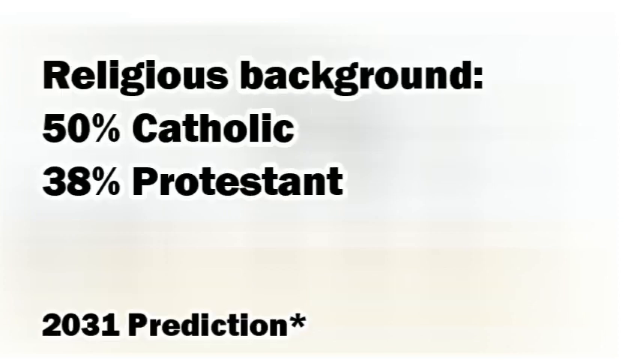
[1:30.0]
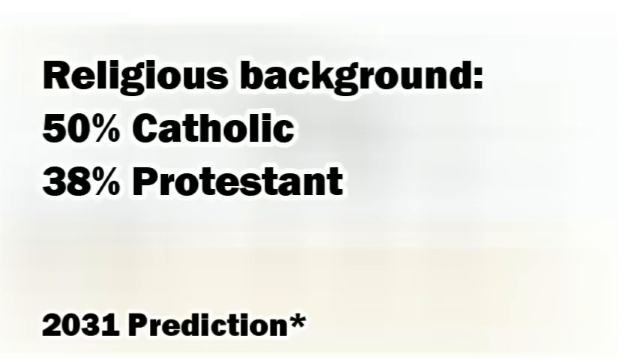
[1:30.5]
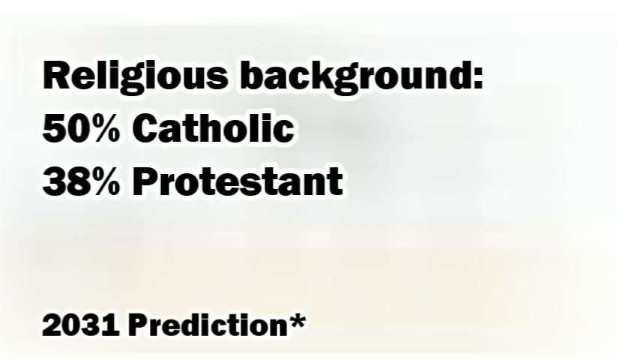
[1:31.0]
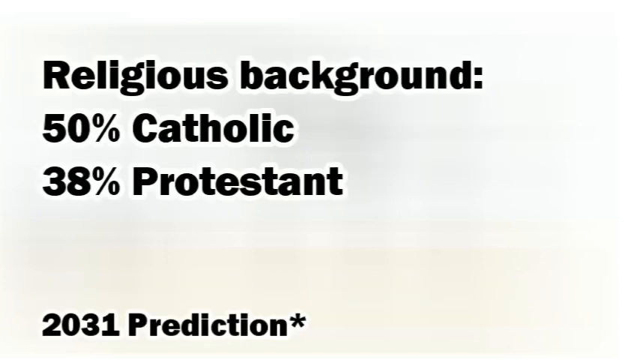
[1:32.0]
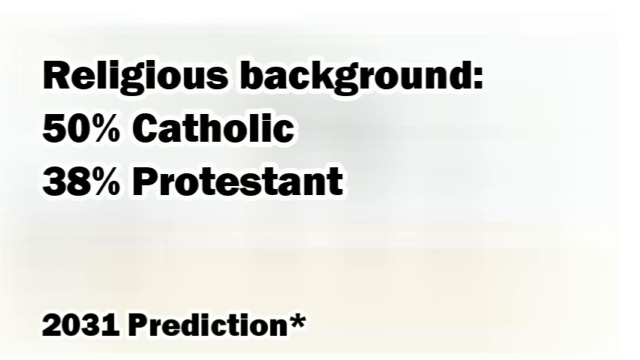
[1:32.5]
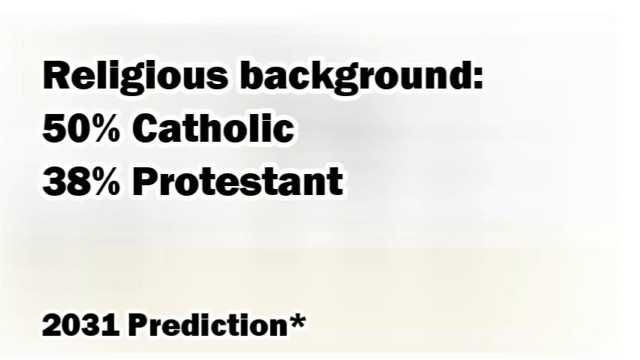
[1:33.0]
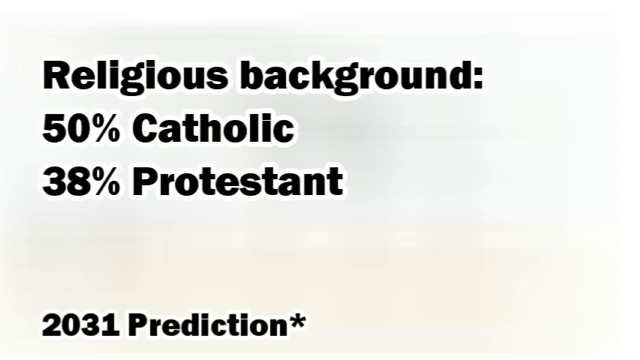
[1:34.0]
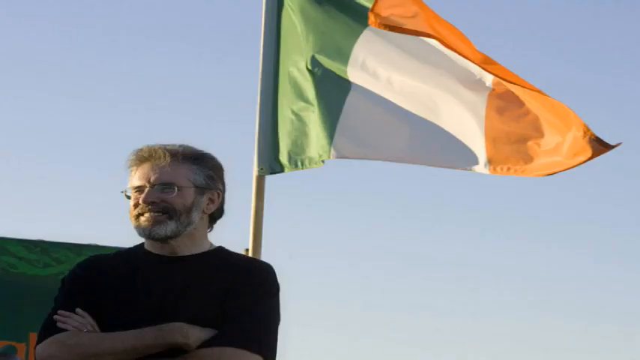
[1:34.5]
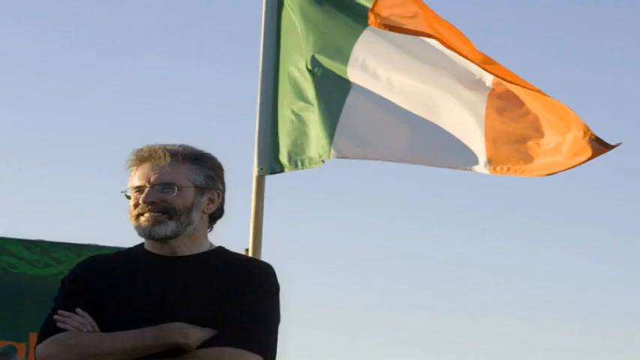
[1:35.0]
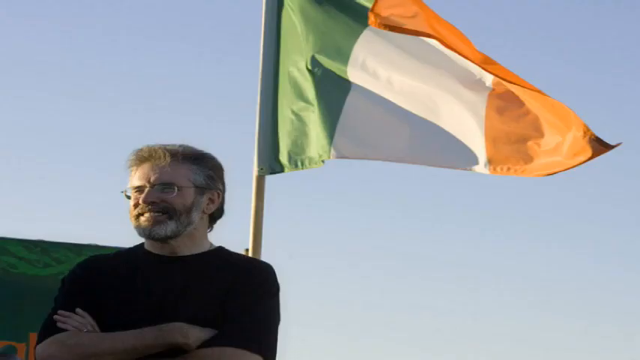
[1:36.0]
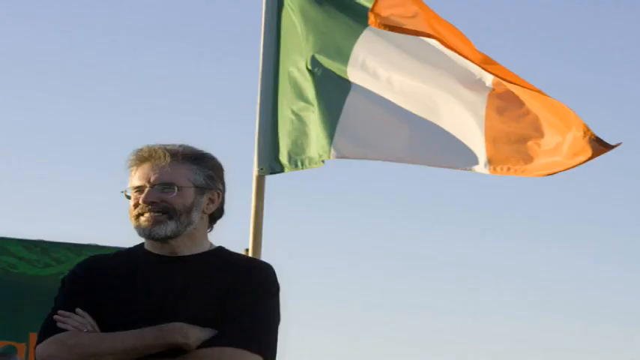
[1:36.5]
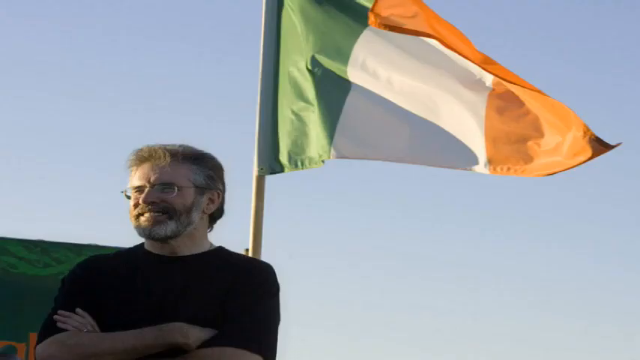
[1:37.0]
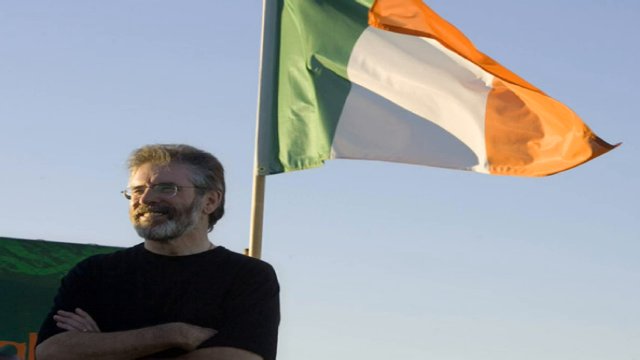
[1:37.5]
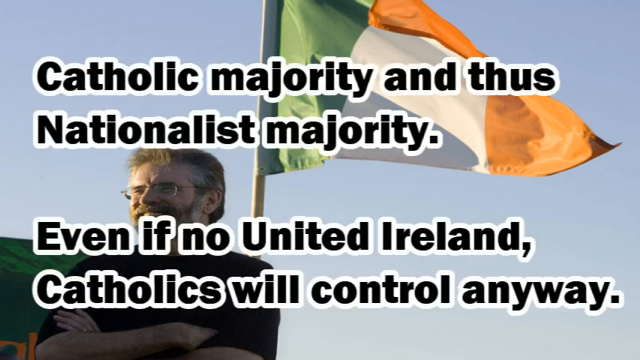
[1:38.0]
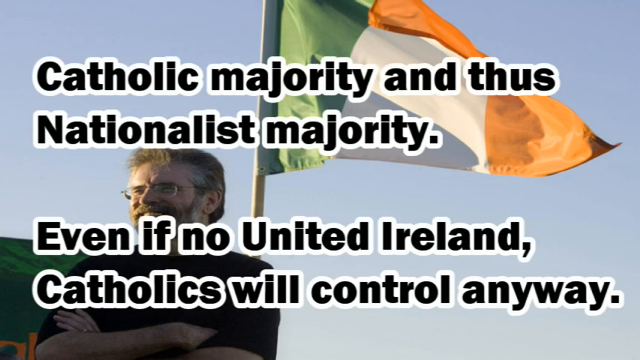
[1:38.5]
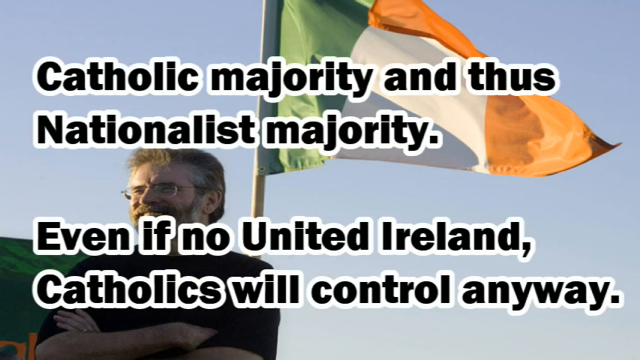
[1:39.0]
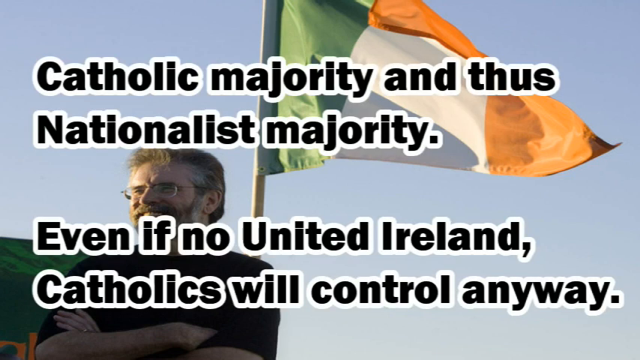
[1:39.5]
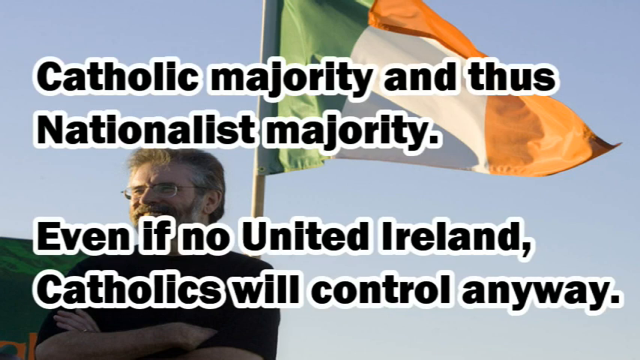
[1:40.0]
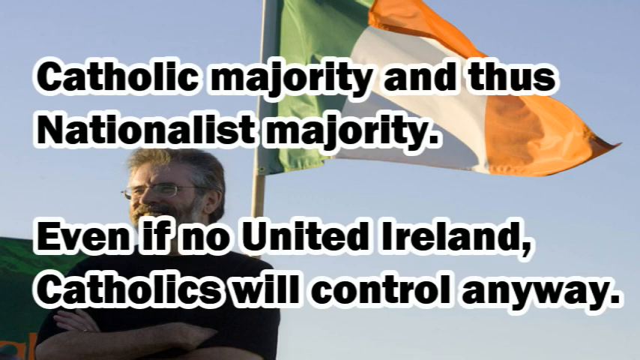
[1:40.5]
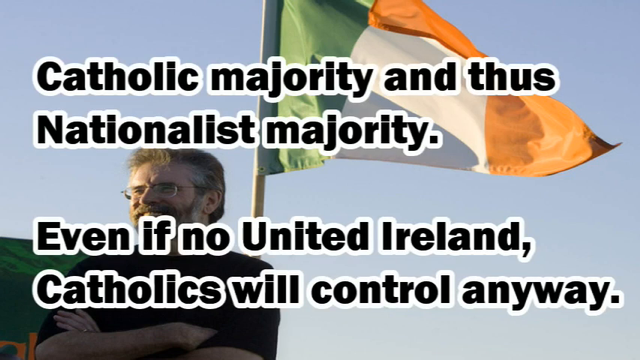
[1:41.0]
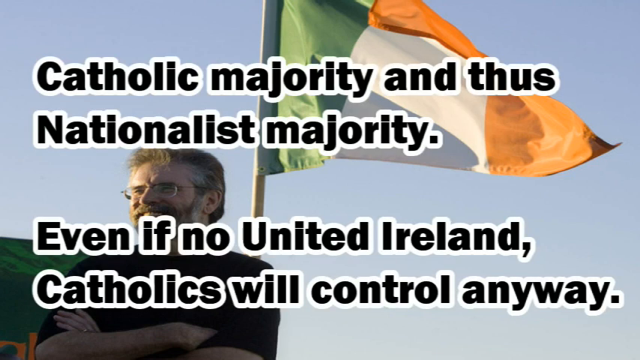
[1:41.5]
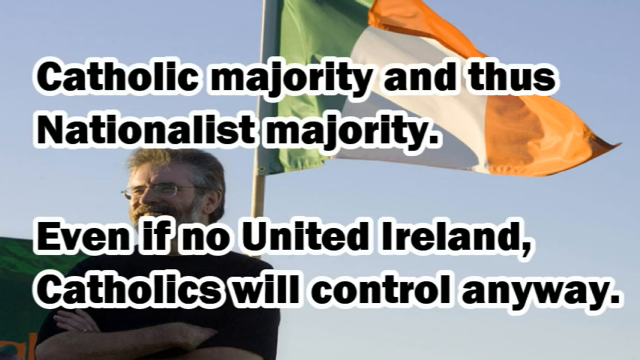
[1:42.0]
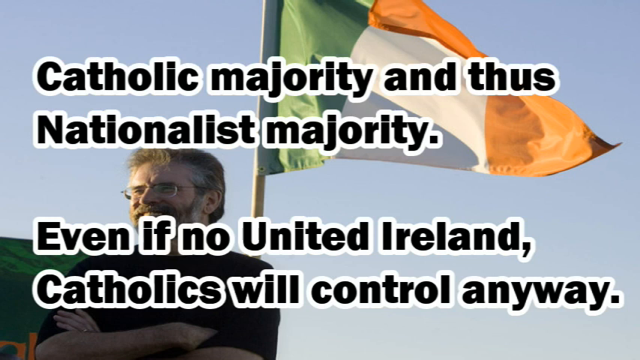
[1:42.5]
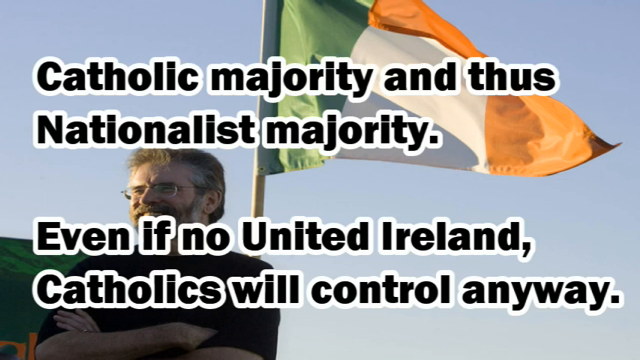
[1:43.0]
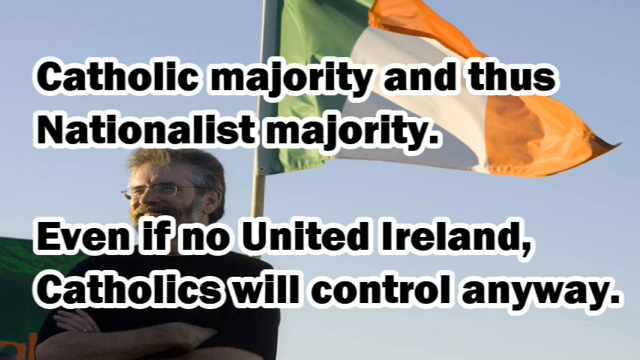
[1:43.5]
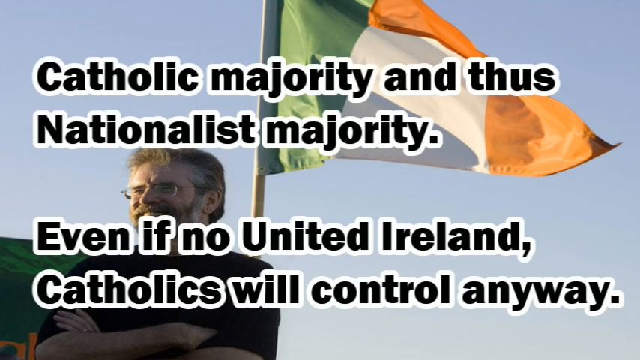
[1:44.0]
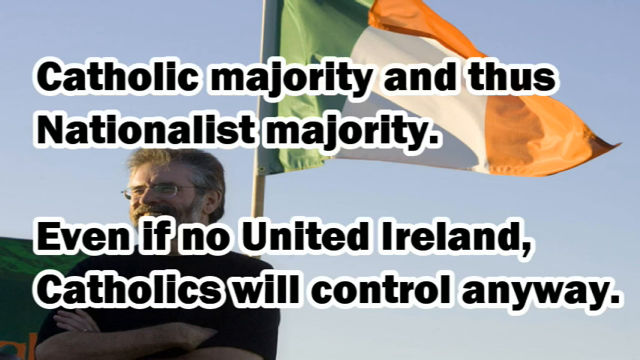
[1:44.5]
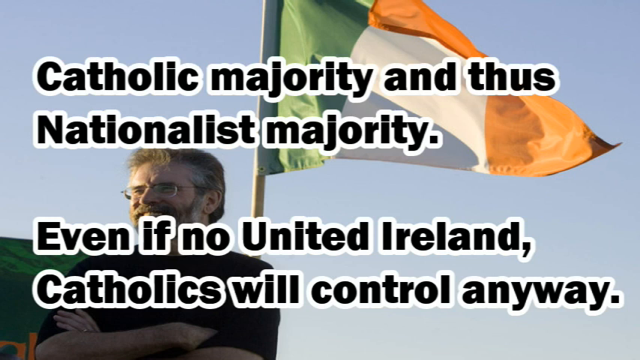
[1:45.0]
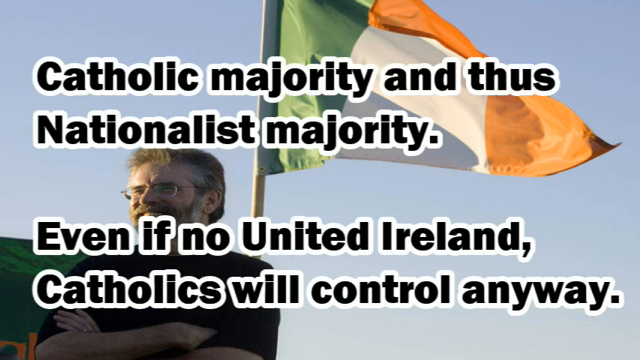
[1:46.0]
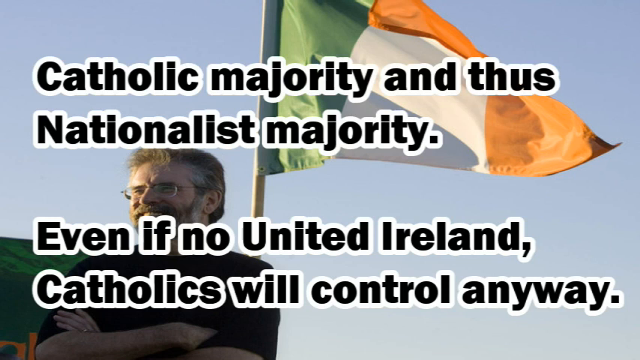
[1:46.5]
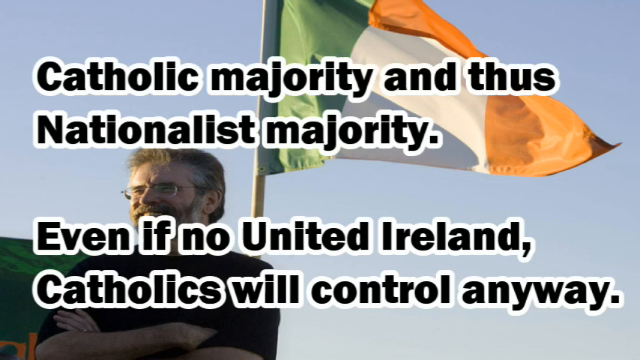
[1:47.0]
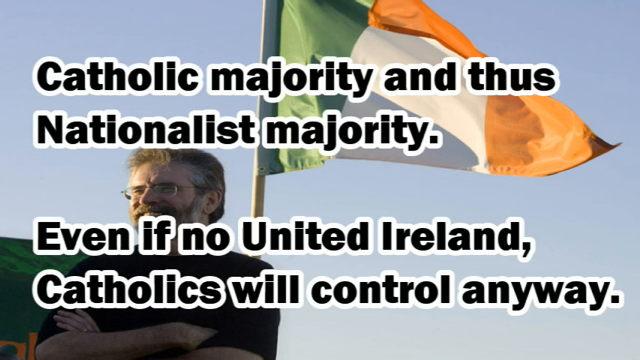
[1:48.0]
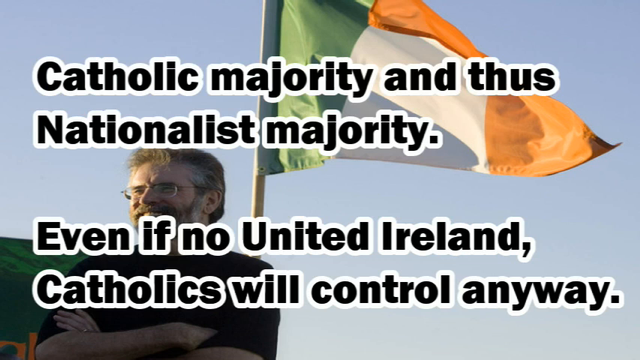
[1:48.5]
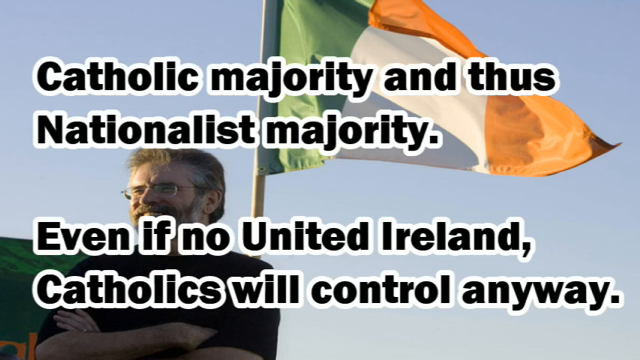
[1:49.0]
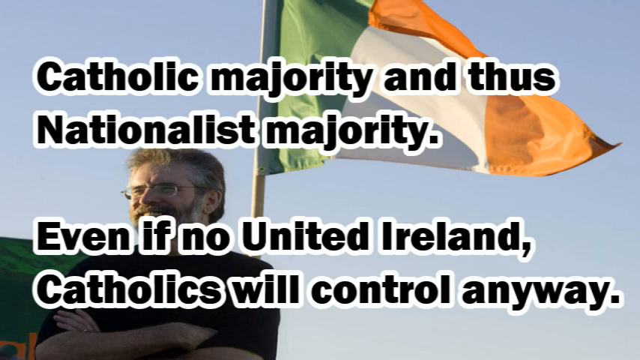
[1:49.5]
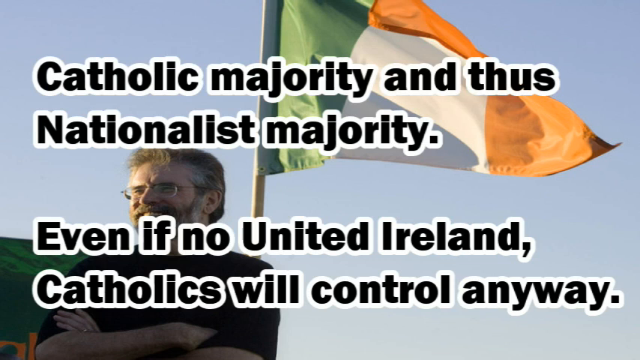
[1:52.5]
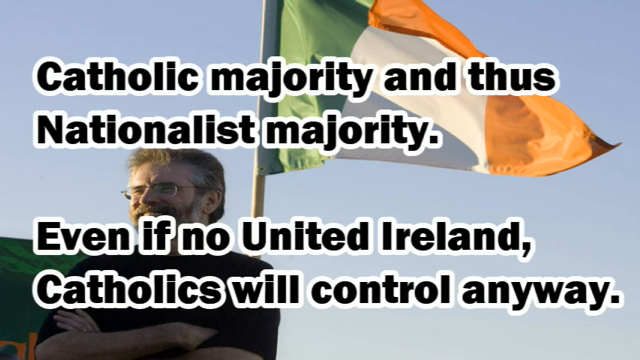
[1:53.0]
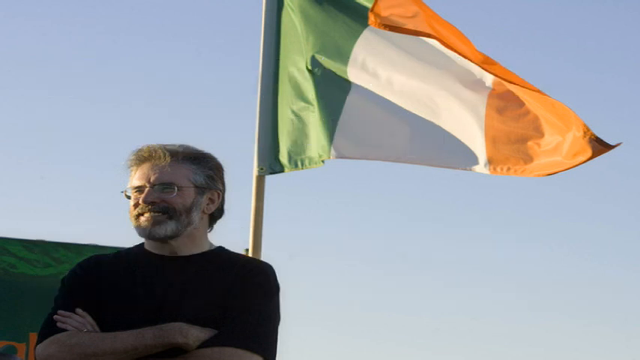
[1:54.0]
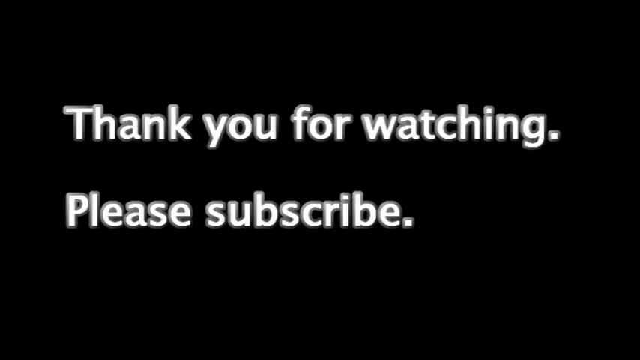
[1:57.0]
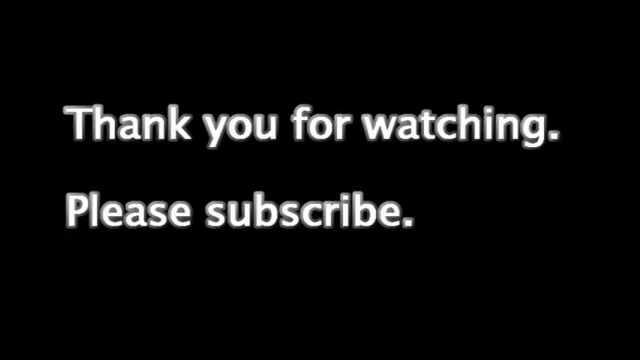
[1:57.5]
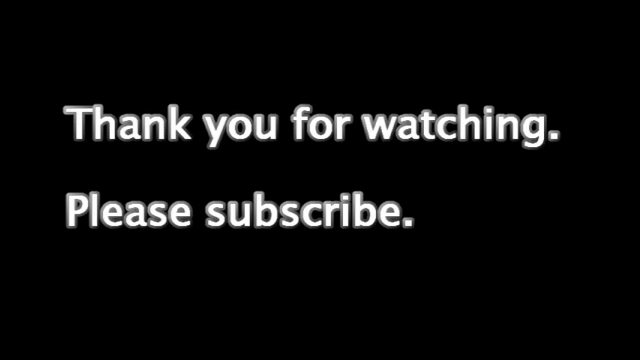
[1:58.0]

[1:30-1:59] A still shows black-and-white words about Protestant and Catholic with percentages. After the statistic, a still photograph shows a smiling man with a salt-and-pepper beard, glasses and a thick head of hair, wearing a black t-shirt. Behind him is a bright blue daytime sky and an Irish flag, green, white and orange, billowing outward in the wind, and sunlight is beaming off his face. Words come onto the screen about a Catholic majority and about Ireland, and they linger for many seconds over the still image. The image then goes away, and a black screen reads "thank you for watching." and then "please subscribe."